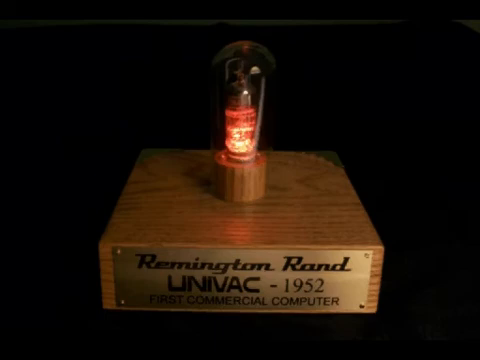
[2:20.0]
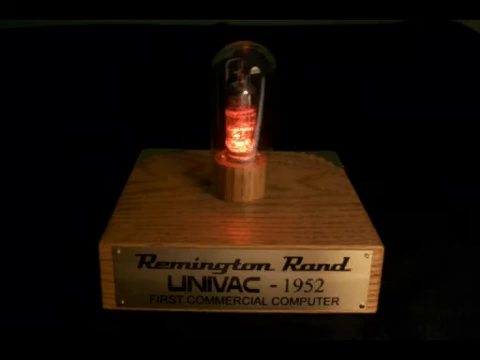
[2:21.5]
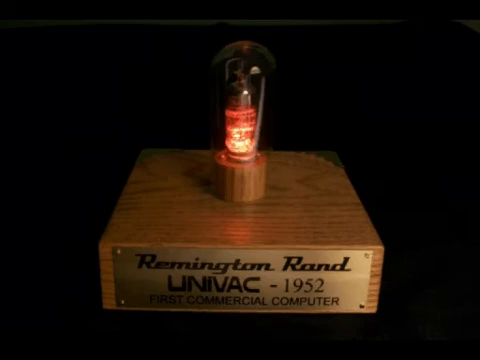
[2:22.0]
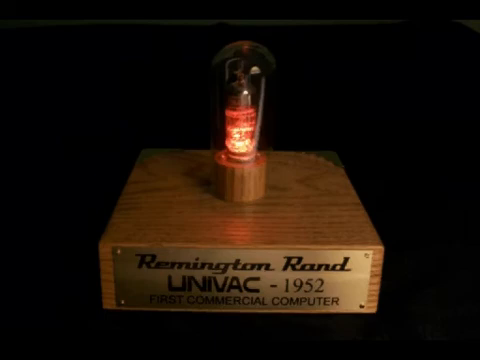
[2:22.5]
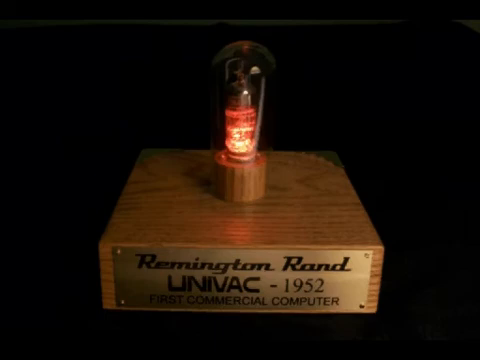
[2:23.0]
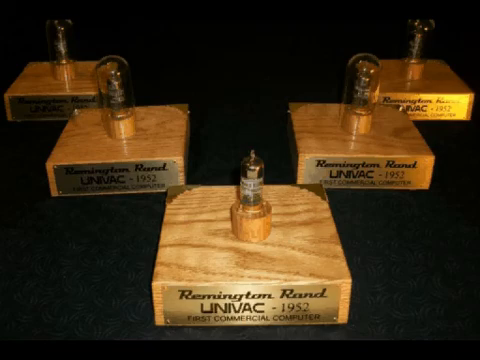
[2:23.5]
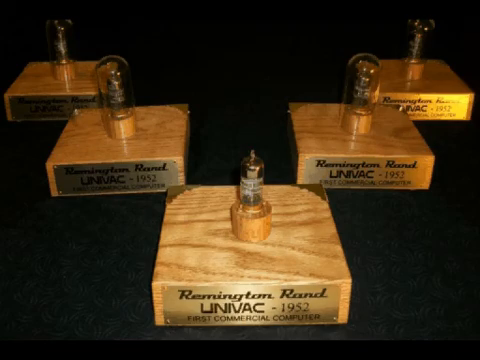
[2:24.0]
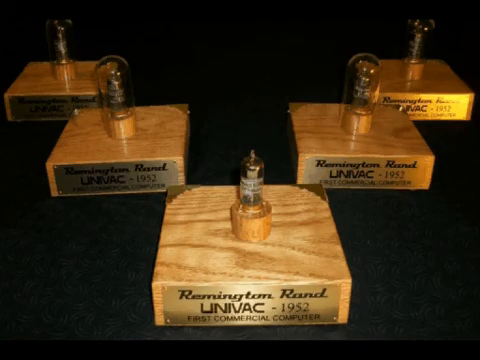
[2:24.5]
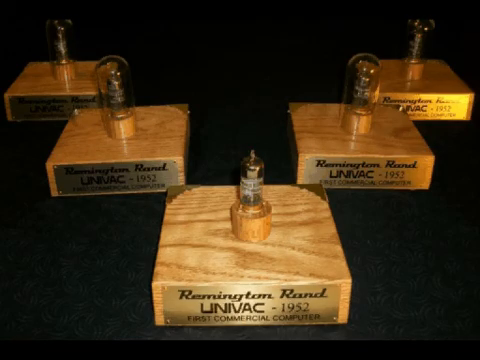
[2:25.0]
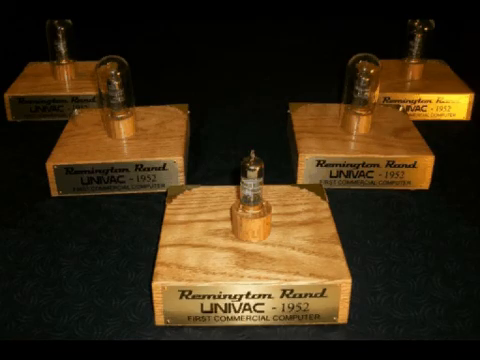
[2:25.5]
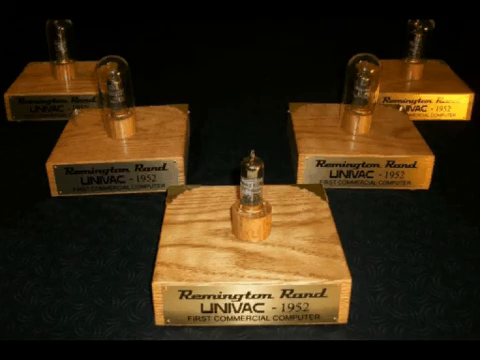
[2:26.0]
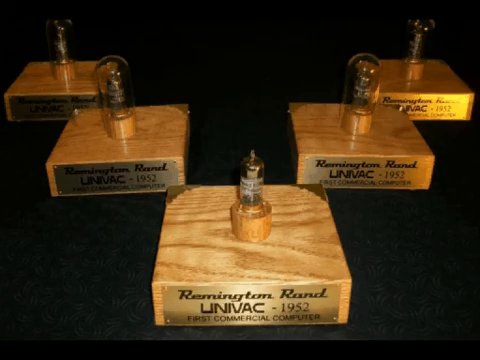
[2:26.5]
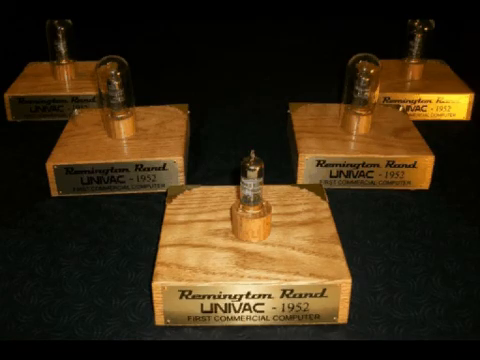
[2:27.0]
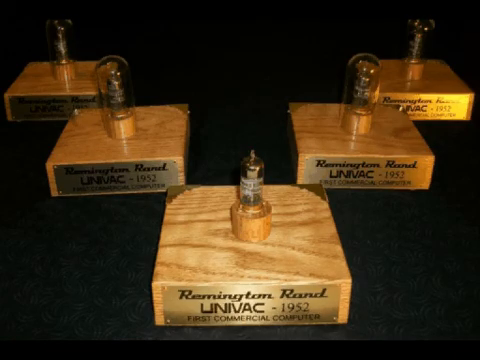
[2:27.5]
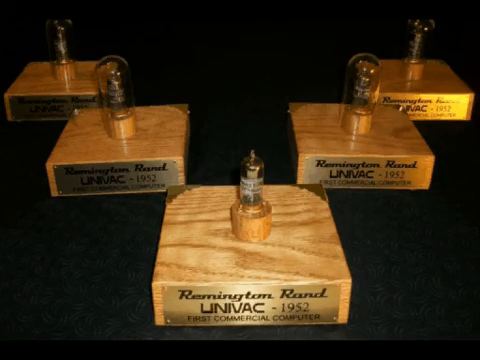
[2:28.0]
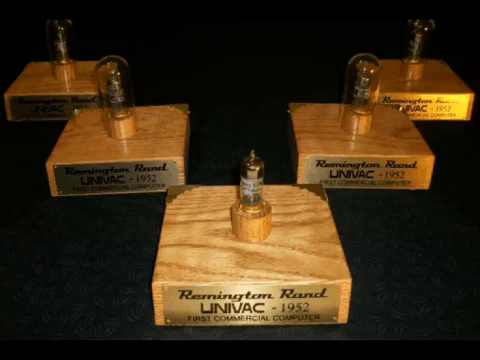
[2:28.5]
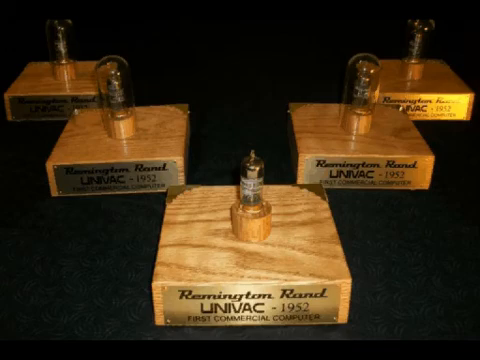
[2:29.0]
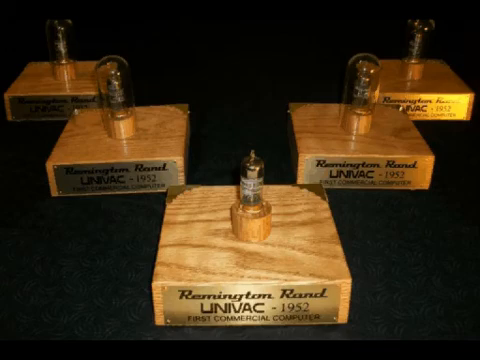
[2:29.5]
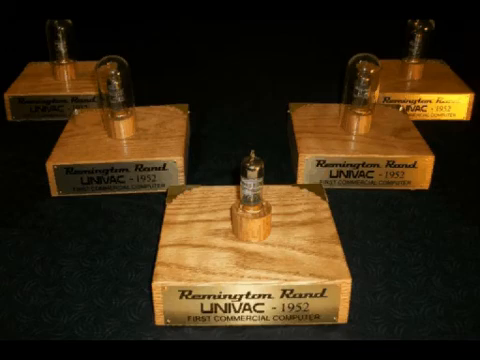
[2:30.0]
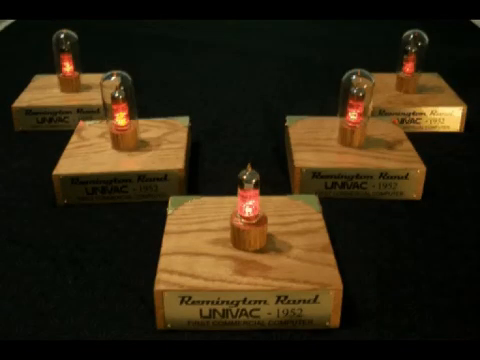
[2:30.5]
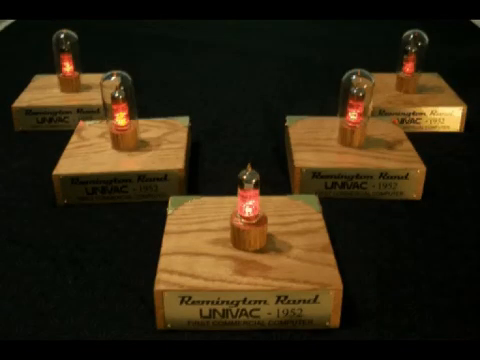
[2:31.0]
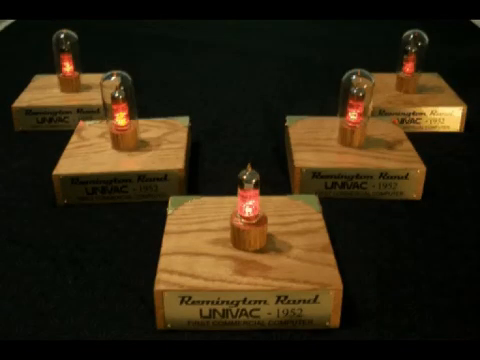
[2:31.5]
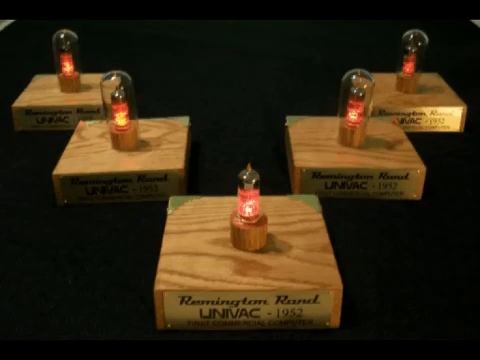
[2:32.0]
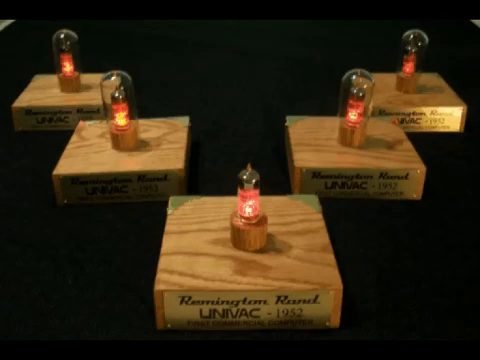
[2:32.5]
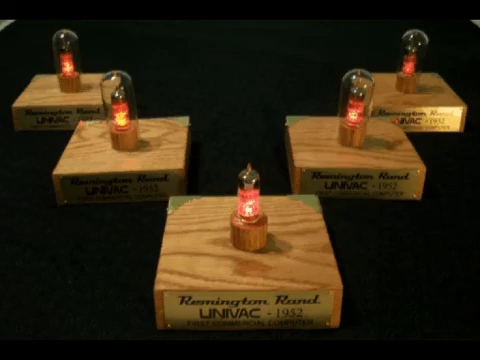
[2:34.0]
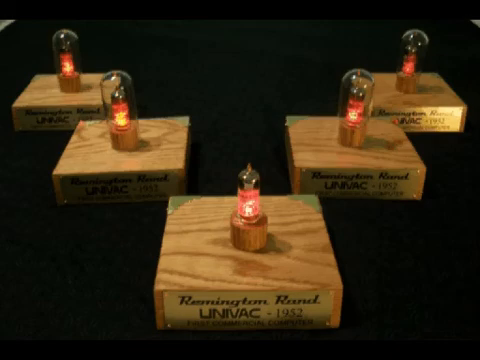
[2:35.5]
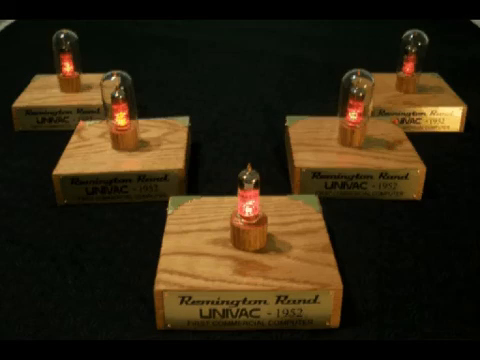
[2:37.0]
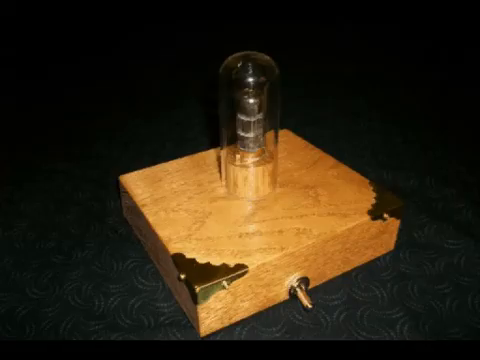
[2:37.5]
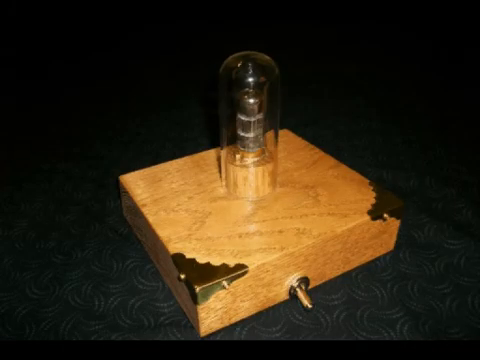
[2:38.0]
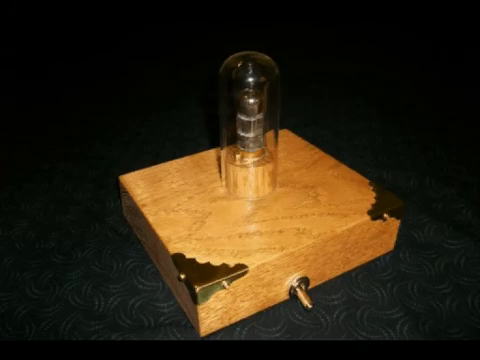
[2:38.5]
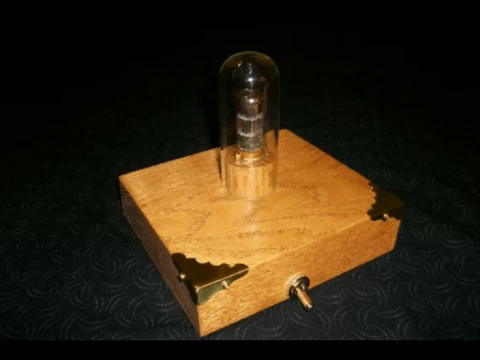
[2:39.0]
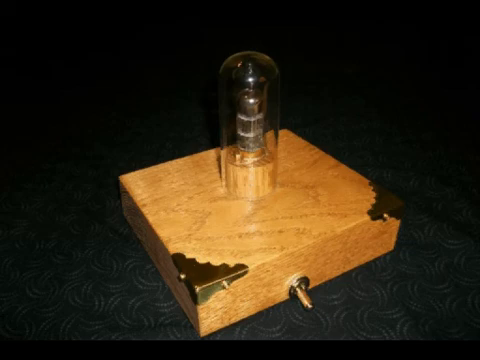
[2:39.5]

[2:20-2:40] A museum piece is shown on a stained and laminated block of wood. On the front of the block is a brass nameplate attached with screws in each corner, so four screws are visible. The plate has three lines of text in black font: the first row reads "Remington Rand", the second "Univac-1952", and the third "First Commercial Computer" in all caps. A circular upraised section made of wood is visible, and on top of it is a bulb inside another bulb, creating a vacuum effect. The bulb is illuminated, showing yellow and red coloration as electricity goes through the filaments inside it. The video then shows five of these items arranged in a V pattern, unlit, and then switches to them lit, with each of the filaments illuminated. Next, the back of the display shows a toggle that can go left or right; when the light bulb is off, it is toggled left. Two corner brass plates are also on the back, each attached with two screws.